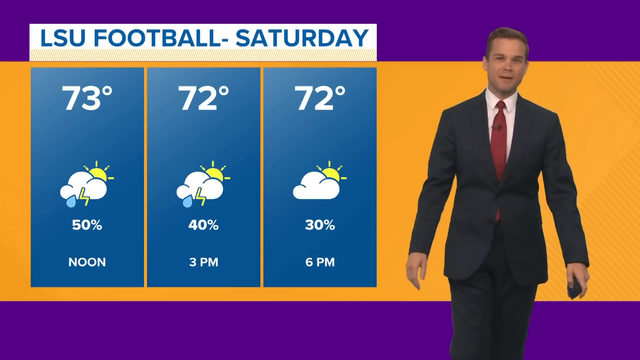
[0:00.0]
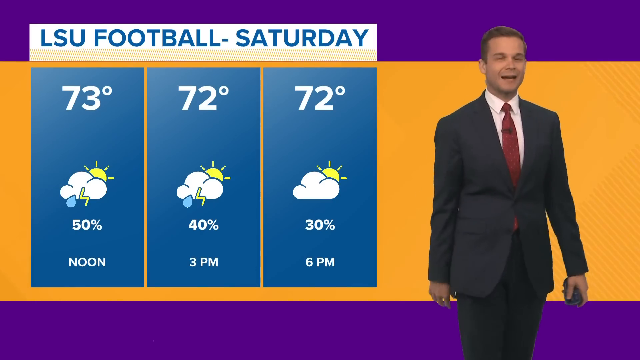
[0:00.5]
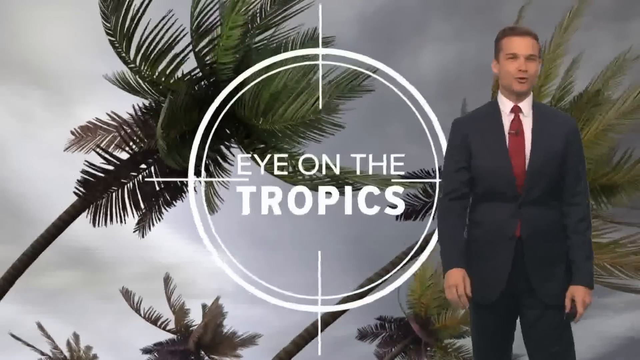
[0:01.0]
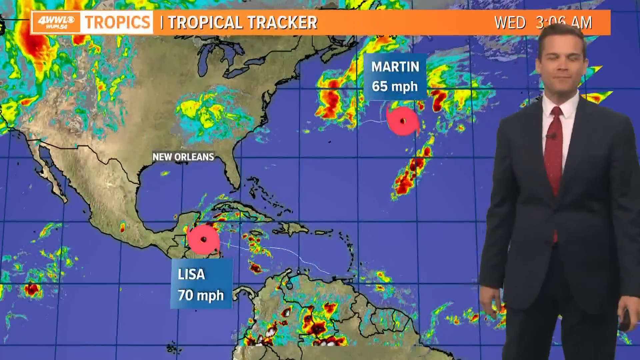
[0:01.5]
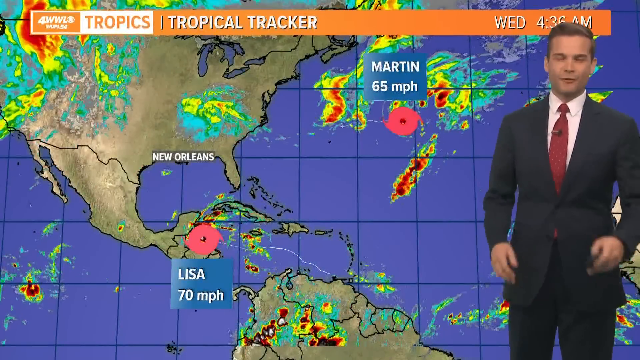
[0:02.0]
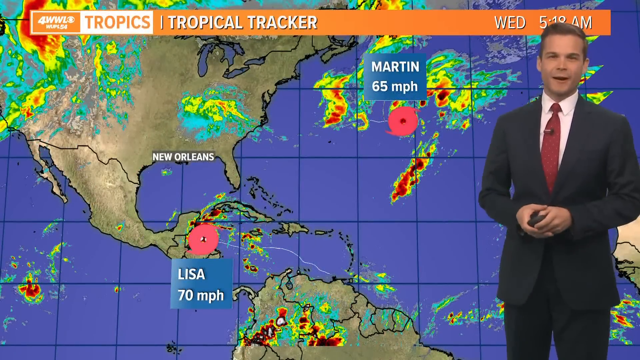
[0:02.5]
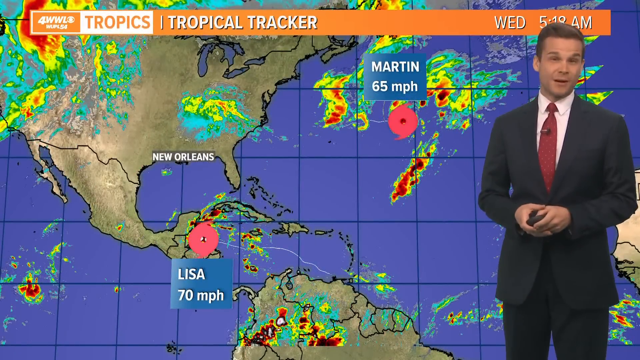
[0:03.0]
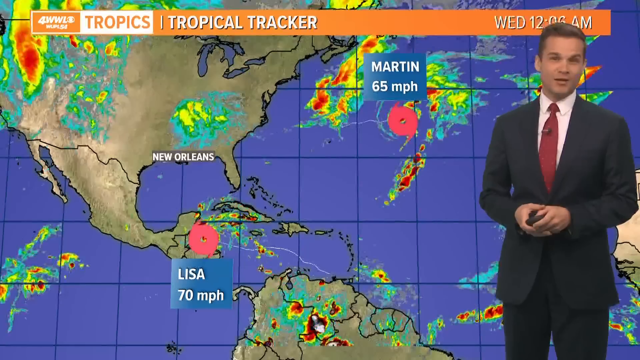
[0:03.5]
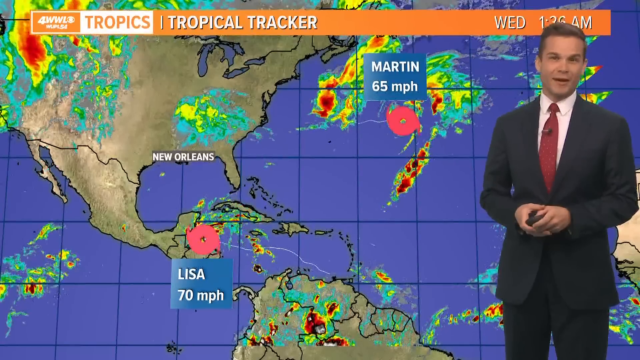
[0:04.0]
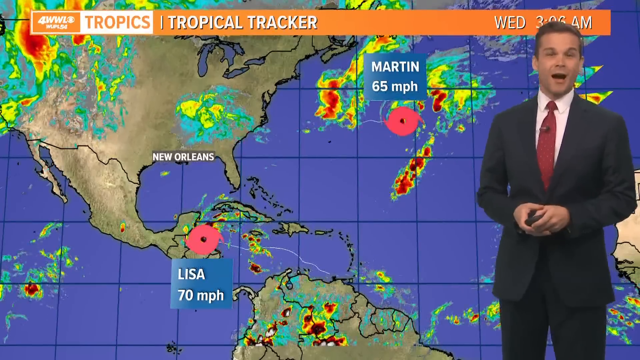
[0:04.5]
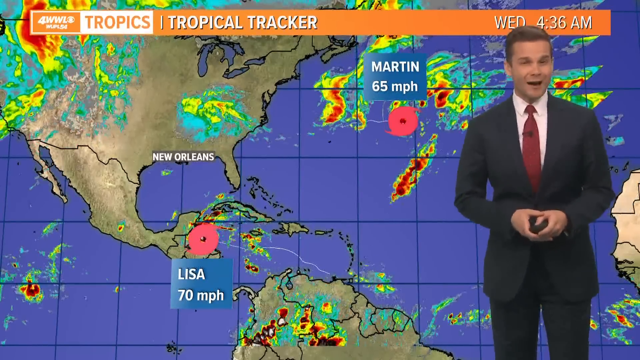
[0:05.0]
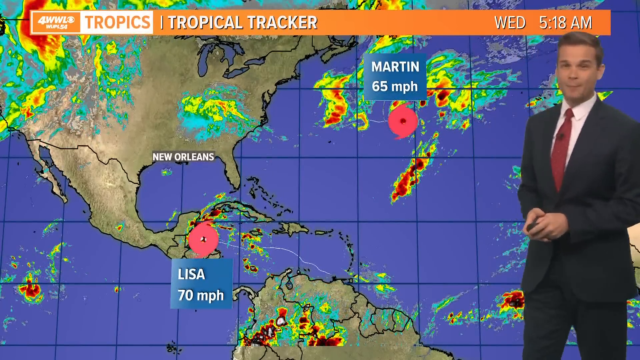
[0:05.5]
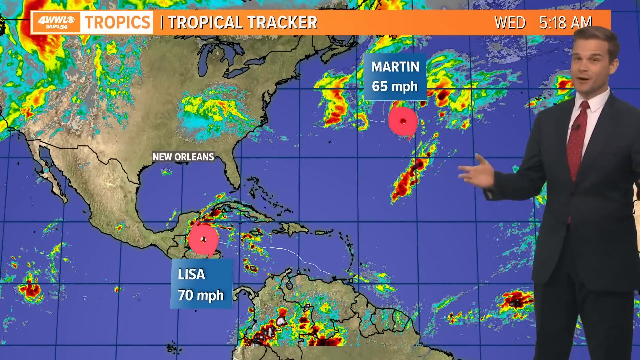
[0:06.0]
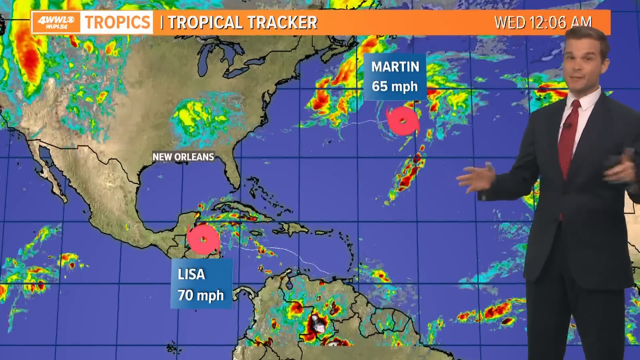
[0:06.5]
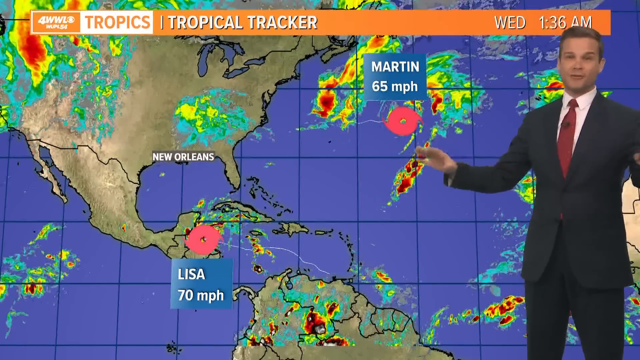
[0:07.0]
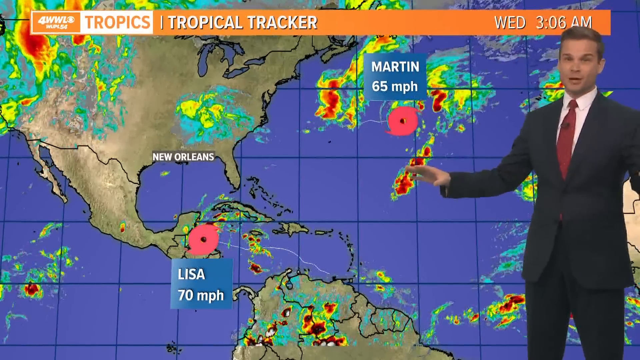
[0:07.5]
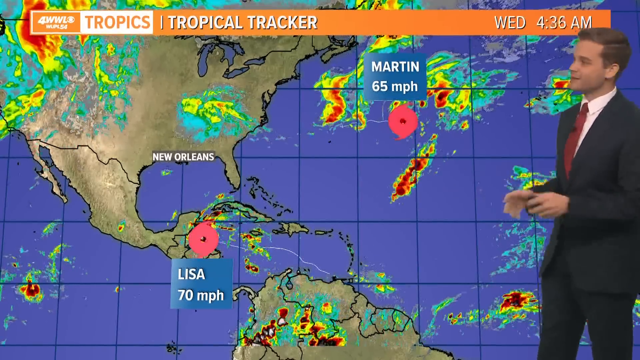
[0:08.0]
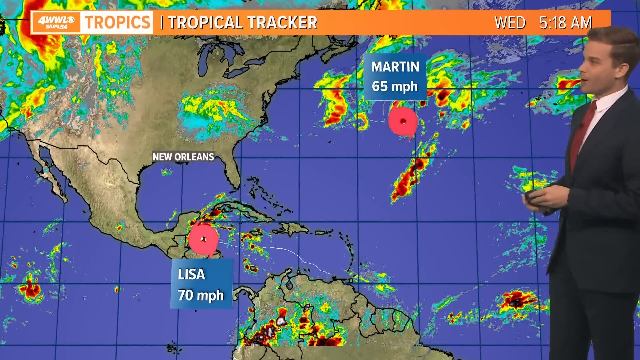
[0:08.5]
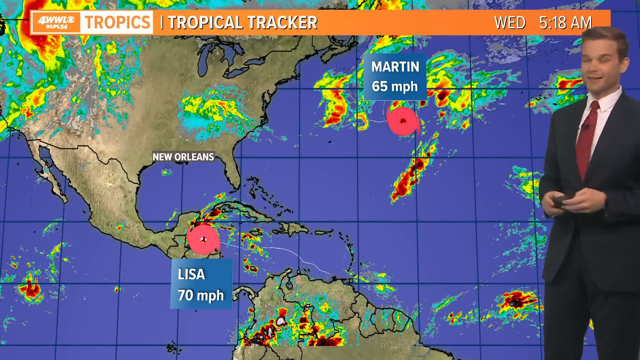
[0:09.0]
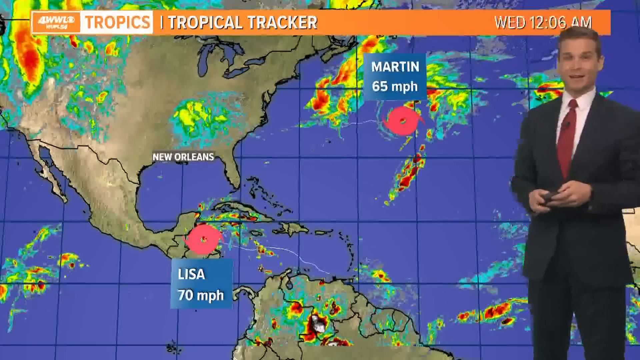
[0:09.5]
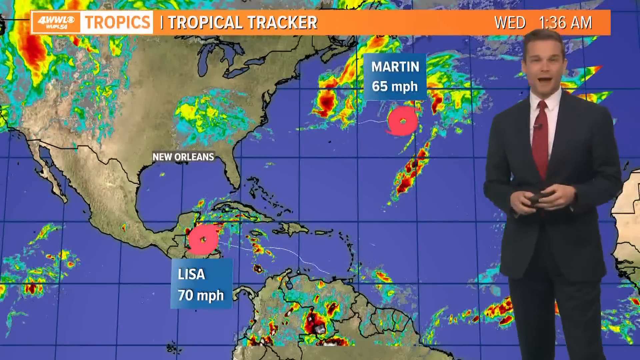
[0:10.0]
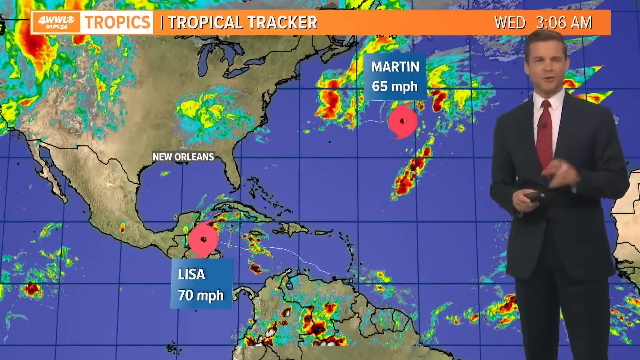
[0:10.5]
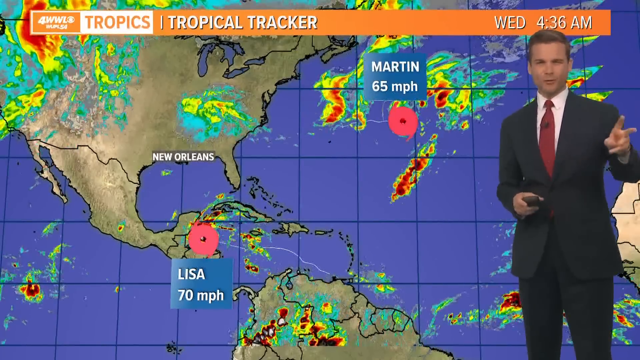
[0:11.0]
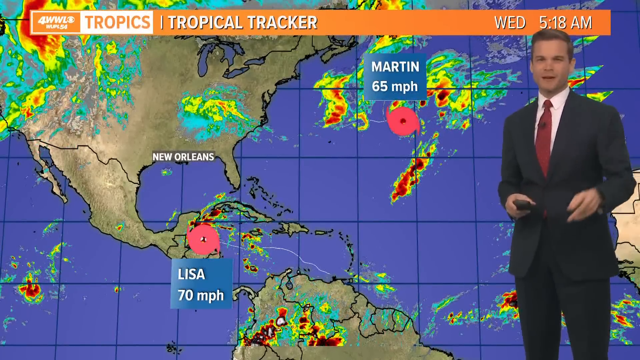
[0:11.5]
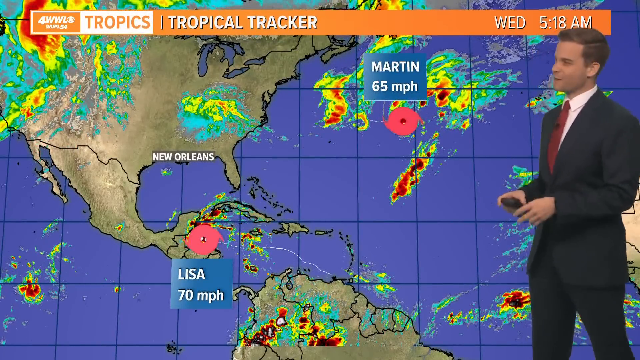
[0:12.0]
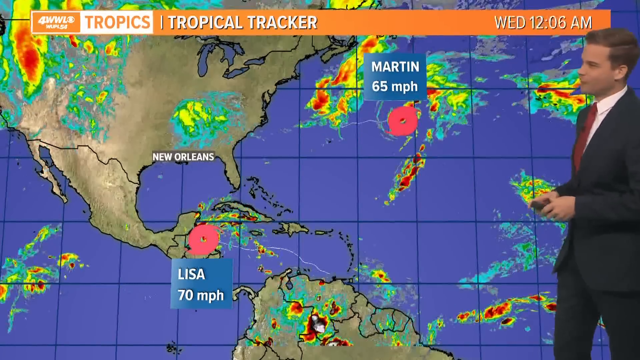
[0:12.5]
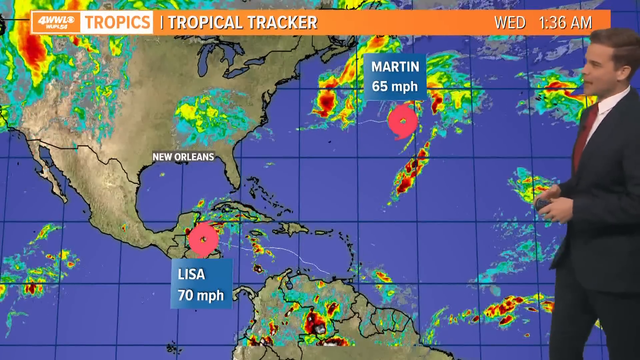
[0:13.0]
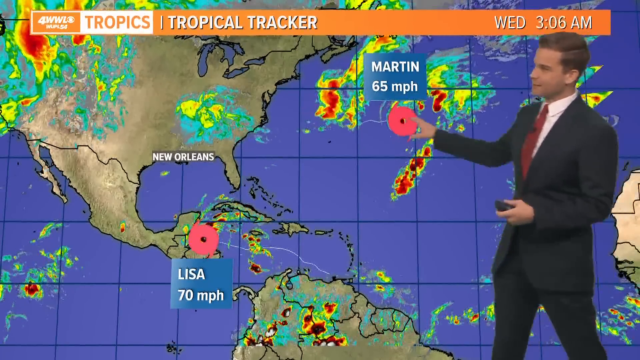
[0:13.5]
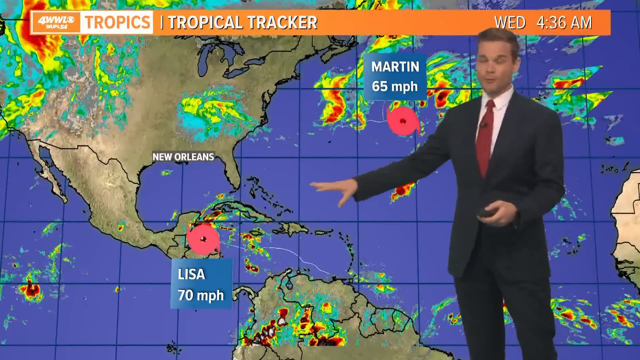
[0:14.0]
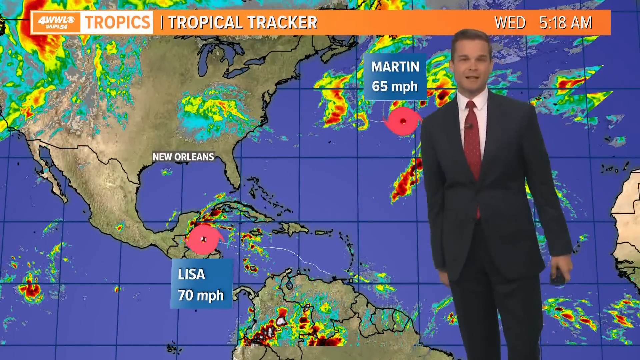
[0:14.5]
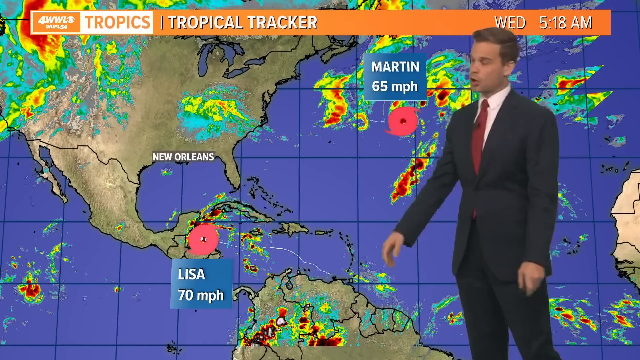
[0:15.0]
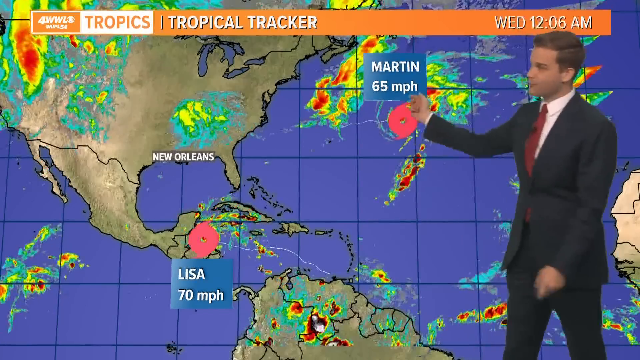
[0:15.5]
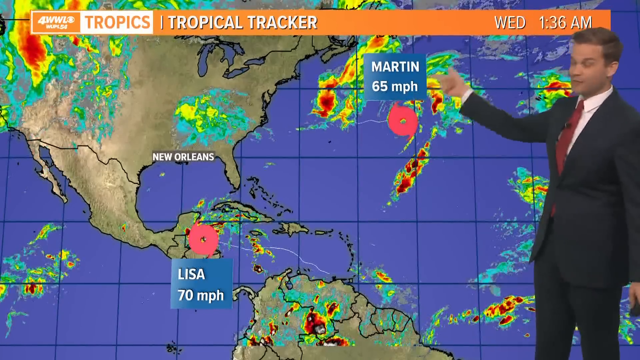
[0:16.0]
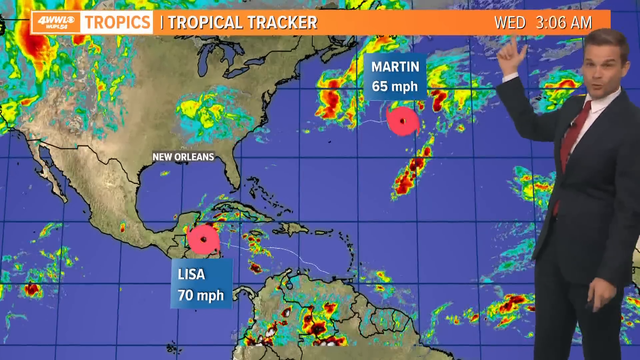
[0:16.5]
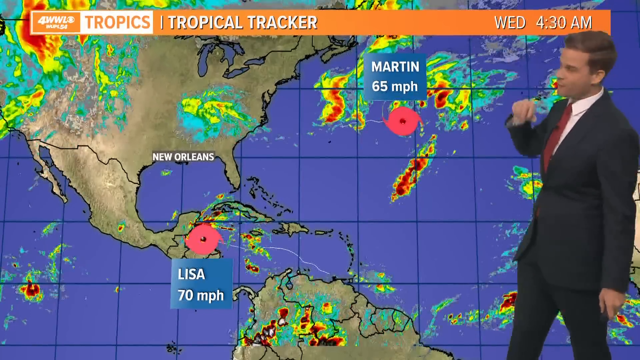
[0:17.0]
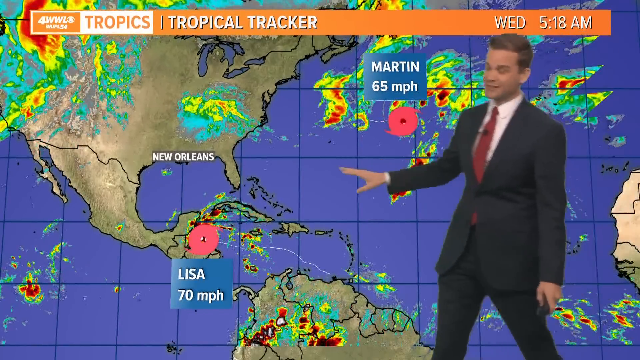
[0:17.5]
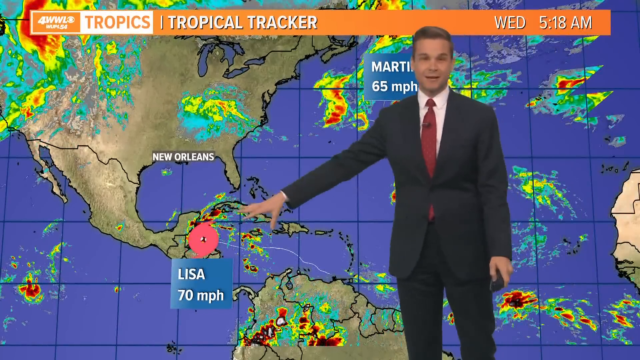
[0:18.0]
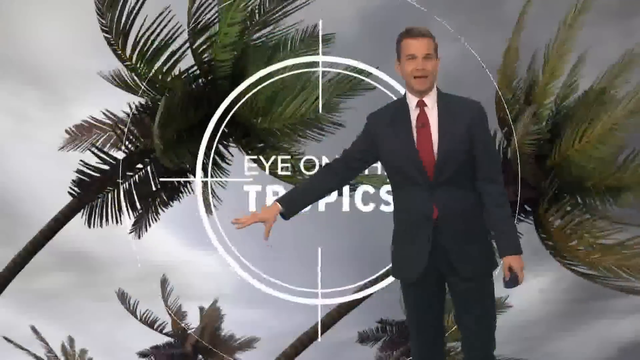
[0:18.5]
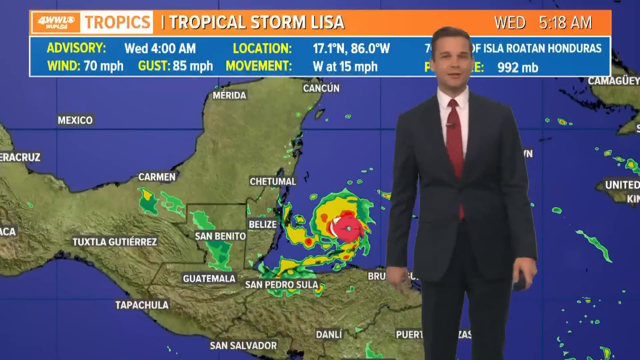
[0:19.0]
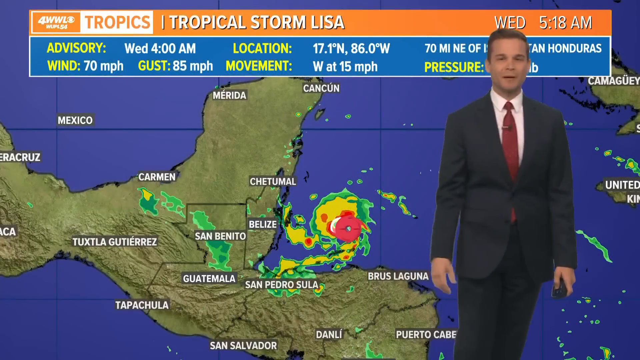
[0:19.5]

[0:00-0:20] A newscast shows the weather for the football game on Saturday. The background has a purple border about an inch deep at the top and another about an inch up from the bottom, with bright orange in between. On the right side, a man faces the camera. He wears a black sports coat, pants, a white collared shirt and a red tie, and has short brown hair and is clean shaven. He holds a clicker in his left hand, with both arms down at his sides. To his left, in the purple banner at the top left, a white banner reads "LSU football - Saturday." Underneath it, starting at noon, are three red triangles. Across the top are temperatures from left to right: 73, 72, 72. In the center are clouds with a percentage chance of rain, and along the bottom are the times from left to right: noon, 3pm and 6pm. The chance of rain decreases from 50% at noon to 40% at 3 and 30% at 6pm. The view then flashes to an outside look of a somewhat stormy sky with palm trees, then cuts to a wide overhead tropical view of a map of the United States. It shows a hurricane named Martin just off the east coast up near New York and another toward Florida named Lisa, with the weather moving up to the right a little. There is heavy rain over the Seattle area and all around Hurricane Martin. Across the top is the tropical tracker. The man stands on the right edge, moving his hands a little and using the clicker, pointing at the map as it shows the hurricane spinning and the storm moving.